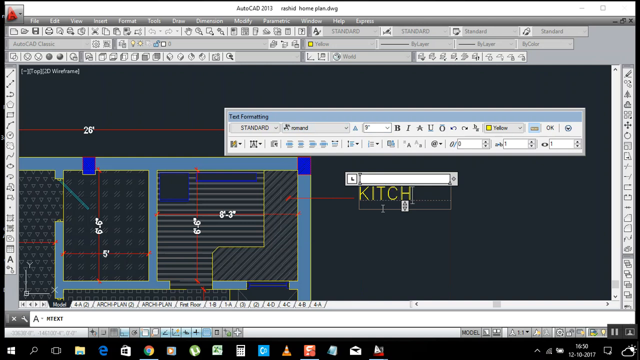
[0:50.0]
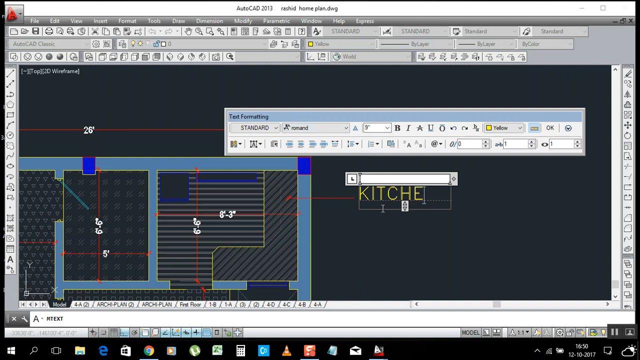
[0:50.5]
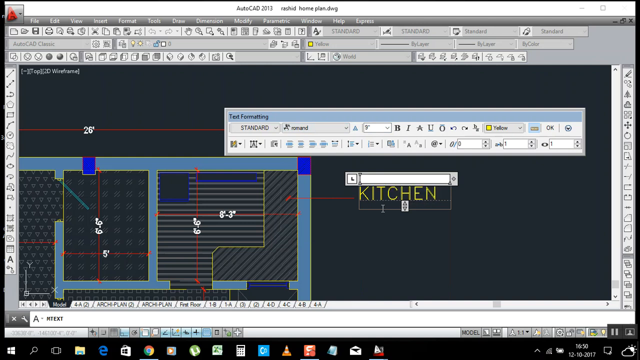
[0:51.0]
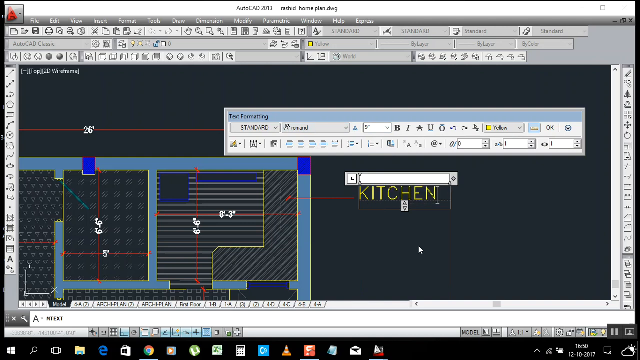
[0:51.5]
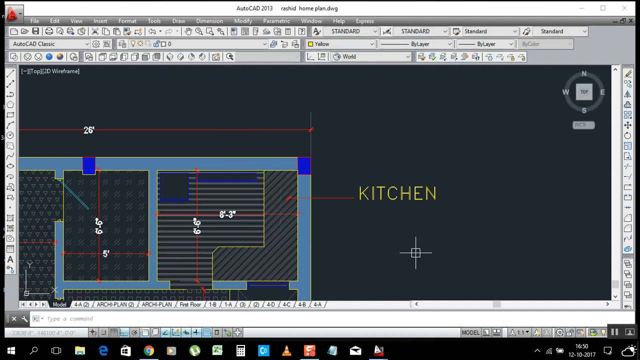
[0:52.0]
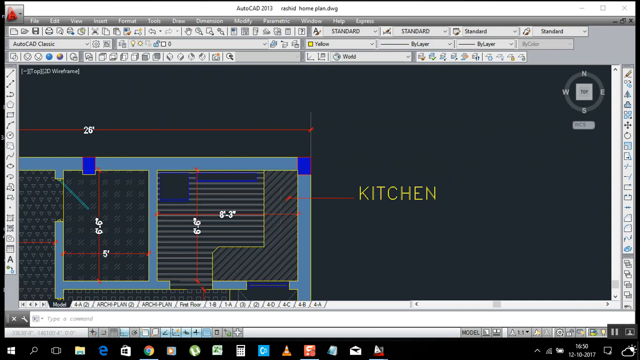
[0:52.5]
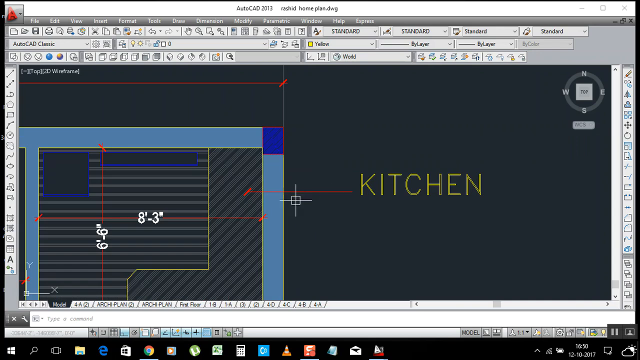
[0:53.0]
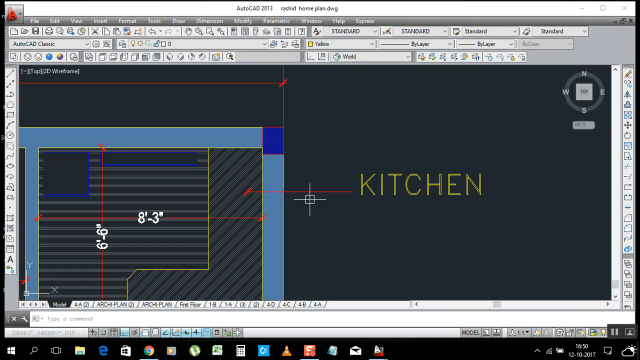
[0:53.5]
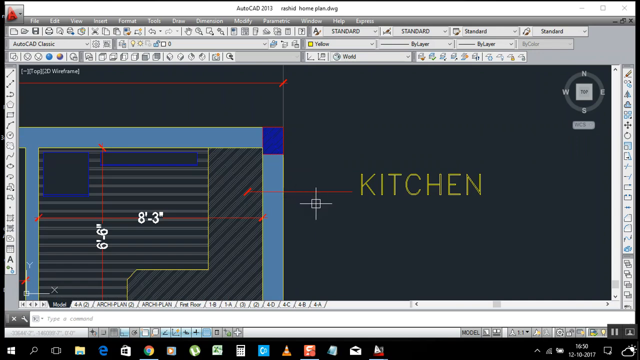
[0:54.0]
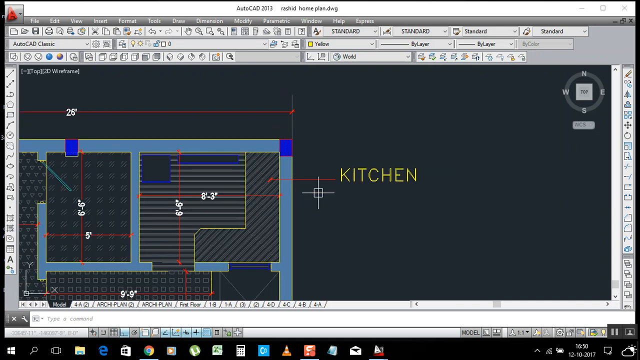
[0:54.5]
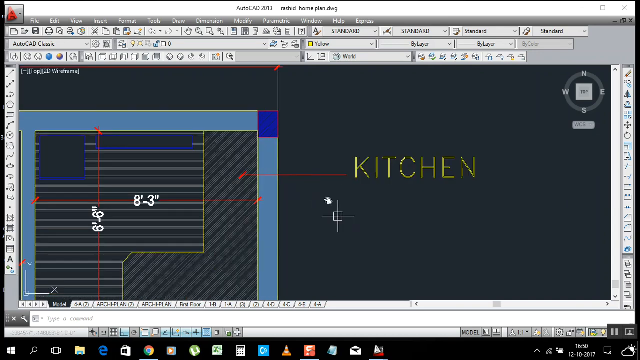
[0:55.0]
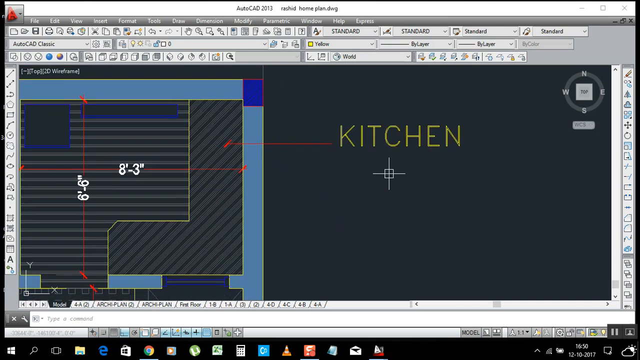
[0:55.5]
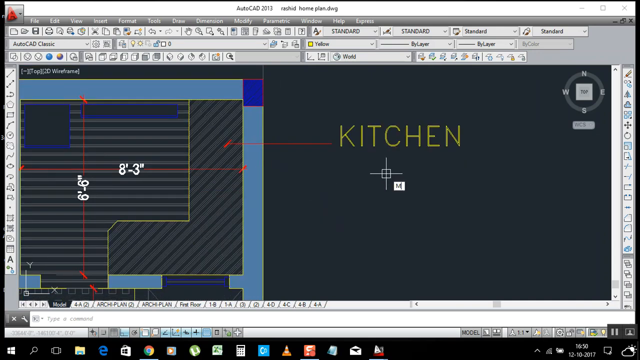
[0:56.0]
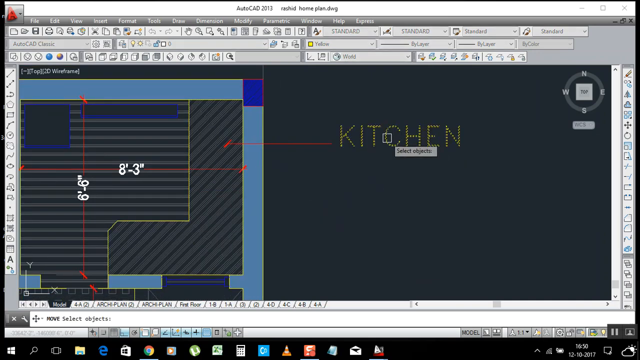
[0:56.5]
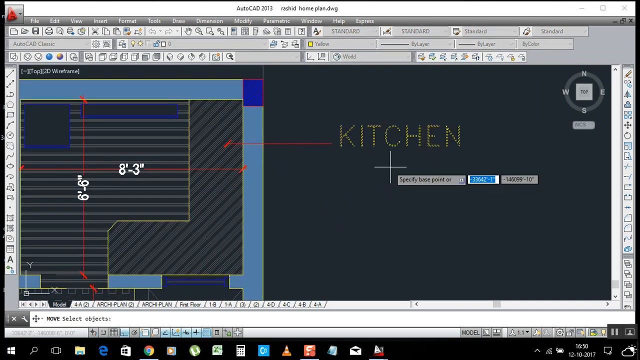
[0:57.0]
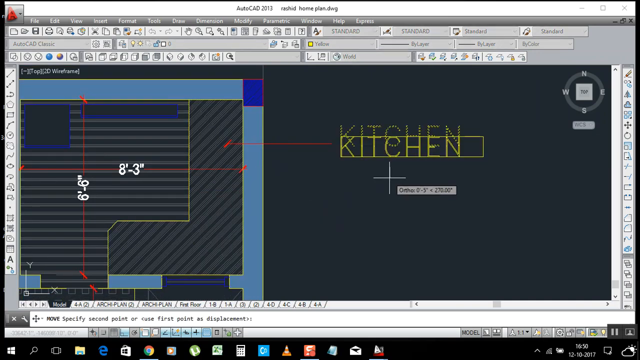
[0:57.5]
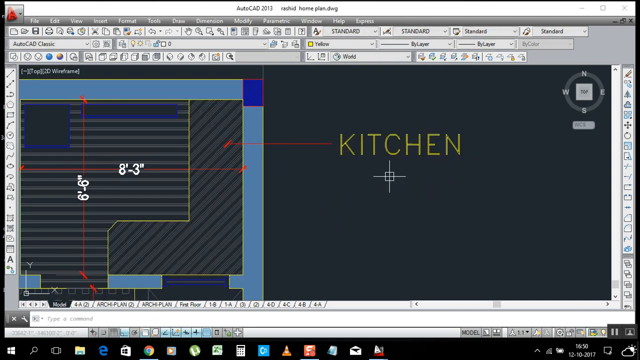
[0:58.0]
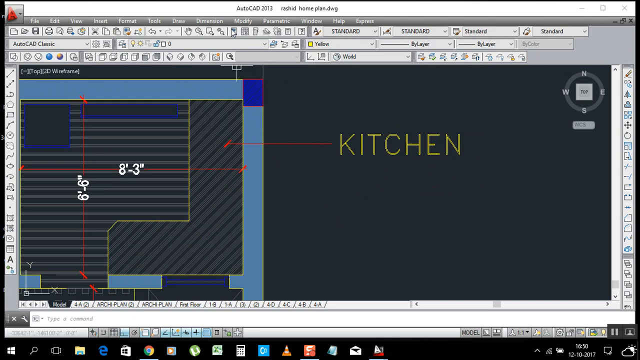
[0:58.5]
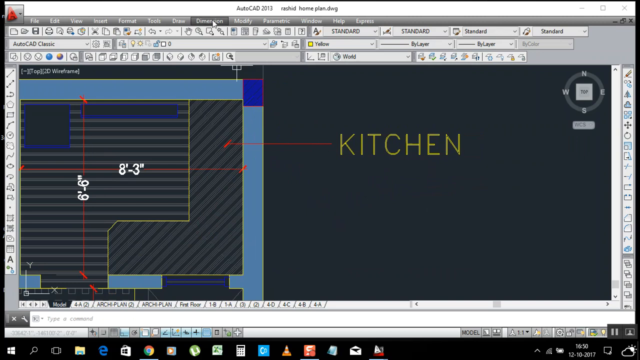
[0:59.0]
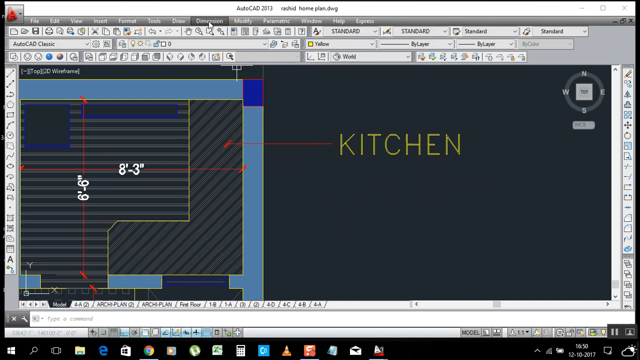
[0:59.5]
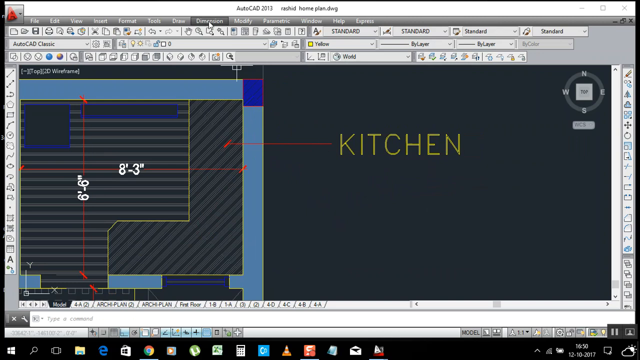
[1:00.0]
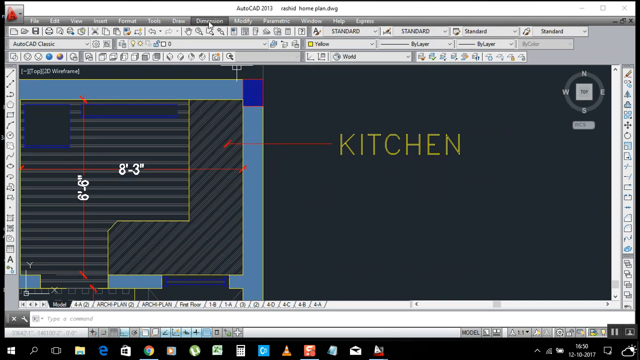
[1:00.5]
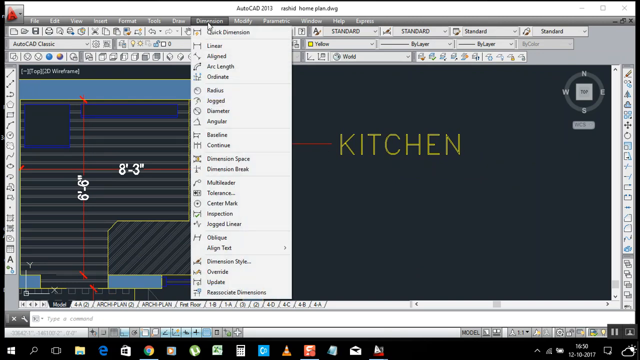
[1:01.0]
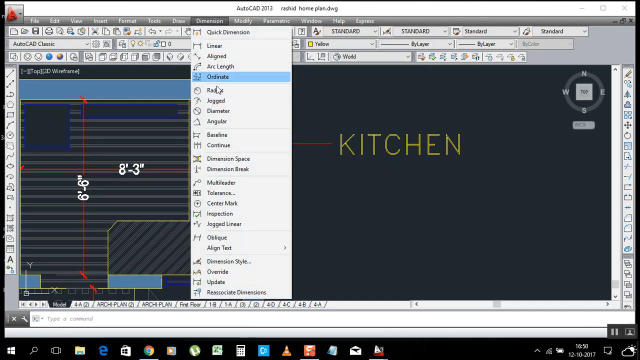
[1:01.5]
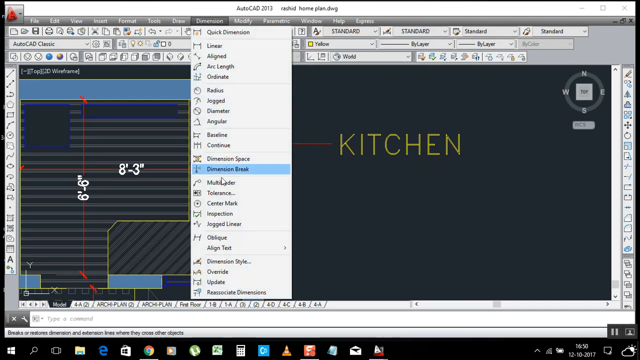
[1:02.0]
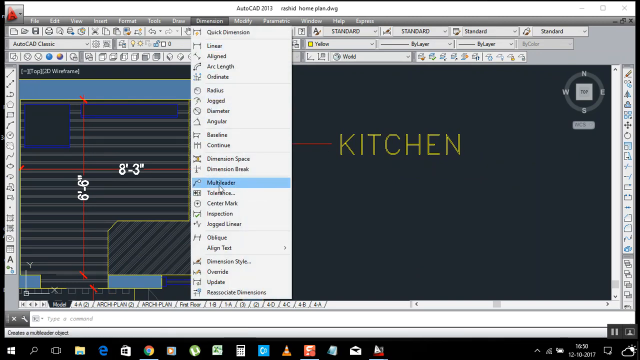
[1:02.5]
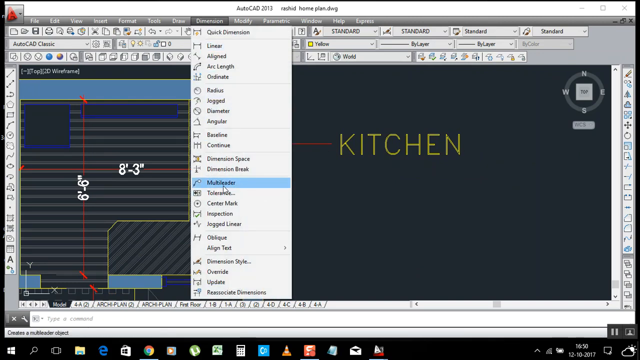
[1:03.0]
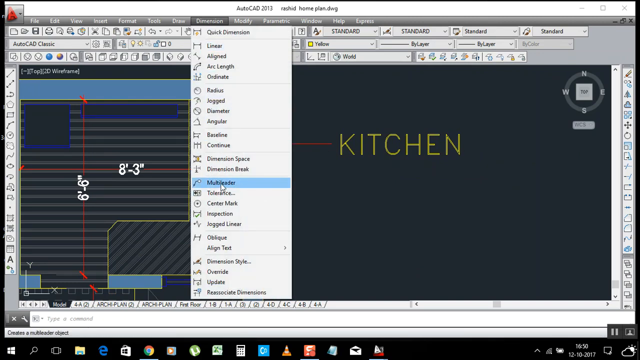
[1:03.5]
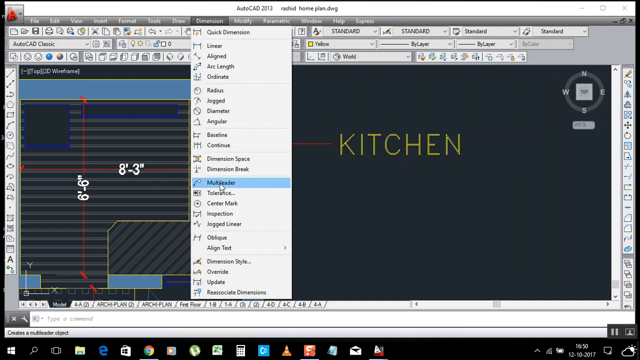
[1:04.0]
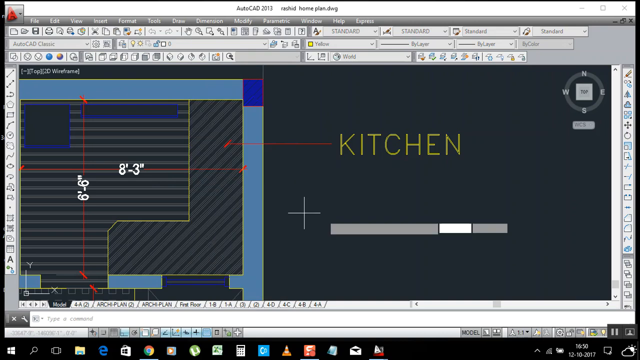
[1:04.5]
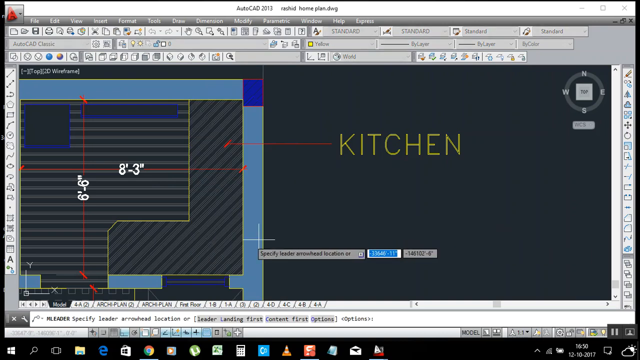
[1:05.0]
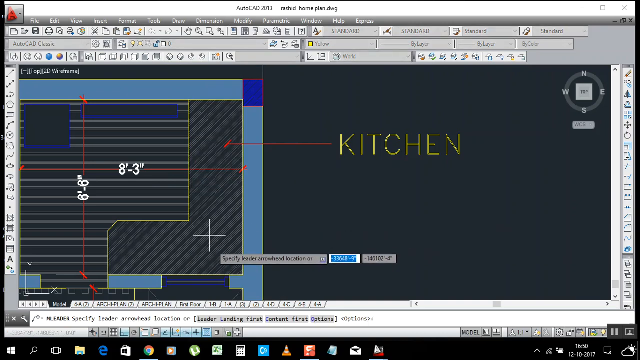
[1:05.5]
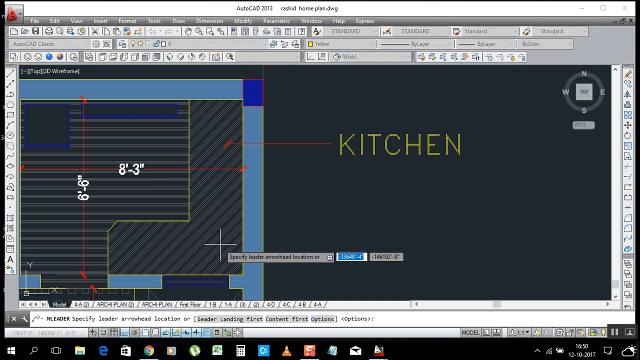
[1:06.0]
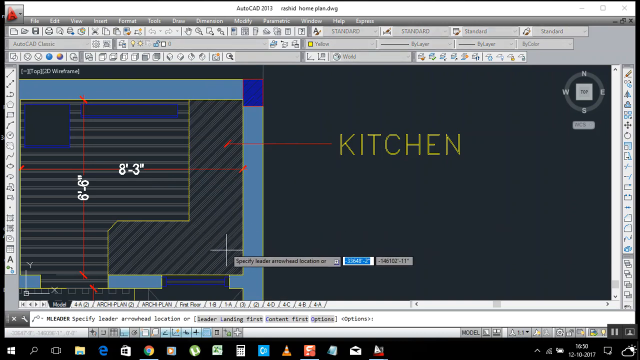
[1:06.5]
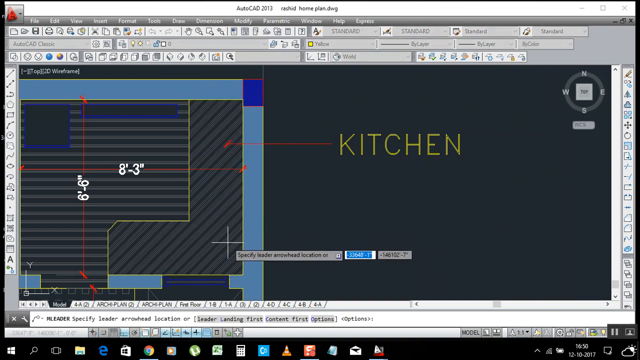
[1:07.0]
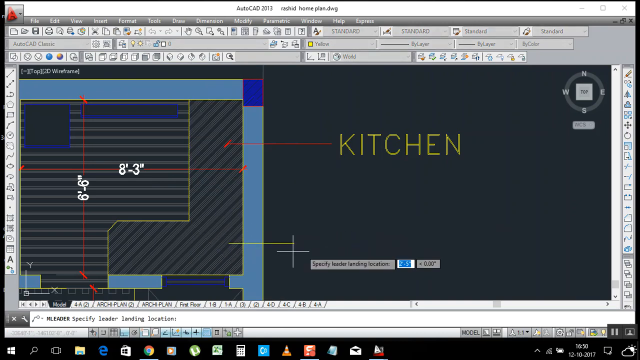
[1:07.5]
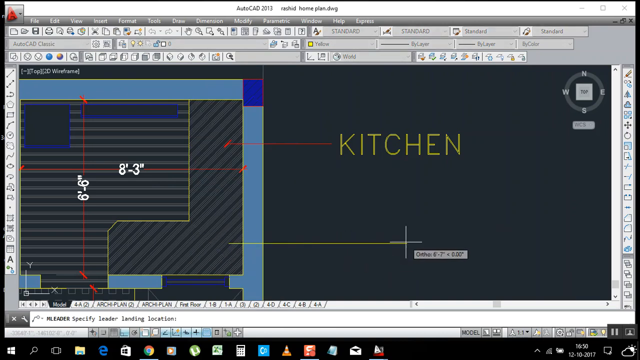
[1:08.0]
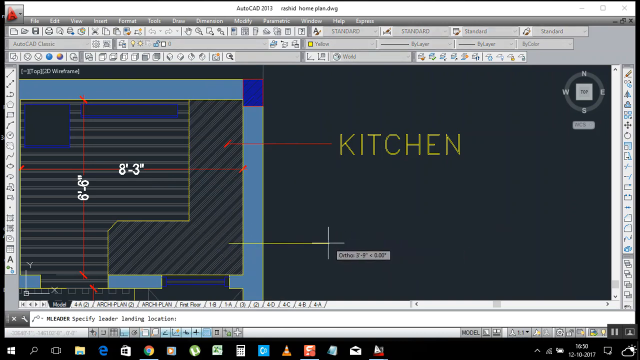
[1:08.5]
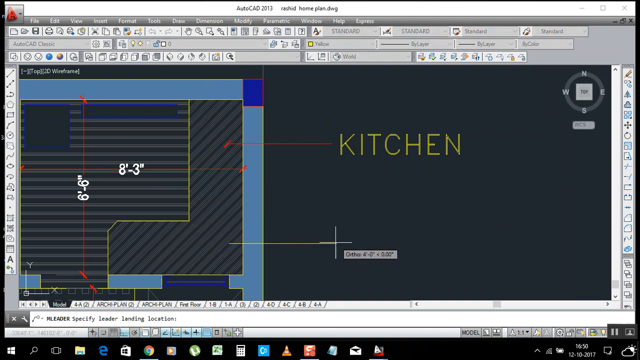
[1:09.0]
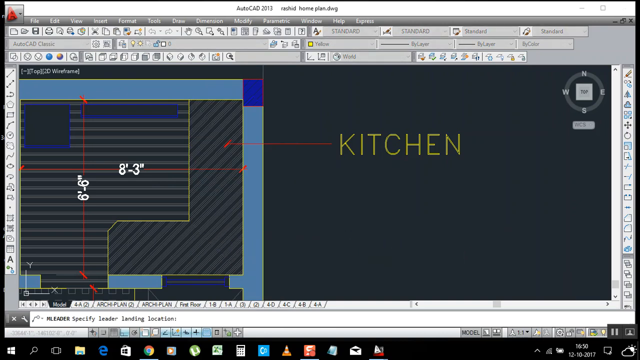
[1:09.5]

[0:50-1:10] The word kitchen is typed, with a text box around it. After clicking away, the word kitchen remains, and the red horizontal line runs from the word kitchen and points to an area on the diagram outlined in the same yellow color, an L-shaped space that is presumably the kitchen. The word kitchen is moved down a little so it lines up better with the red horizontal line. The pointer goes up to the main menu of AutoCAD, hovers over an option called "dimension", and opens the dimension menu. It scrolls down through the options to one that says "multiliter", shakes left and right highlighting it, and selects it. The screen then says "specify the leader arrowhead location", and a yellow horizontal line is dragged from the same kitchen space on the diagram.